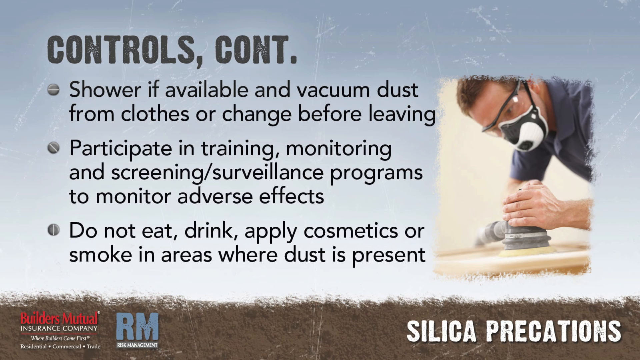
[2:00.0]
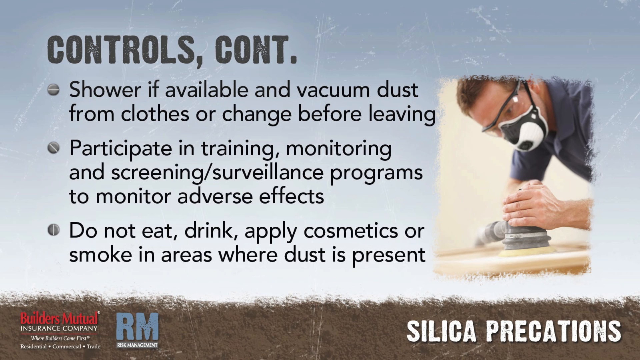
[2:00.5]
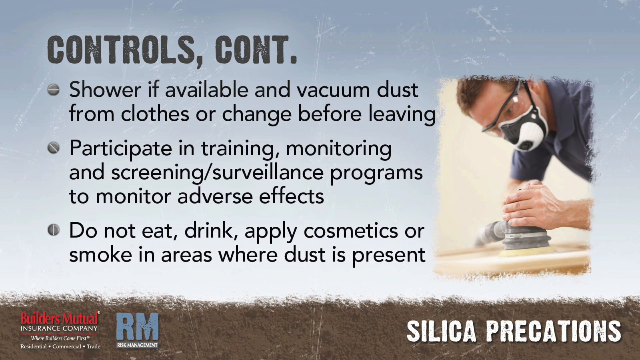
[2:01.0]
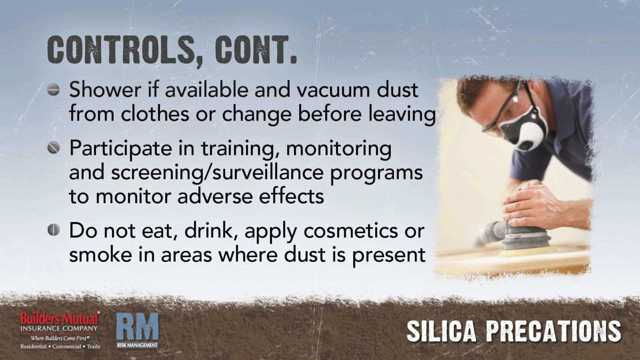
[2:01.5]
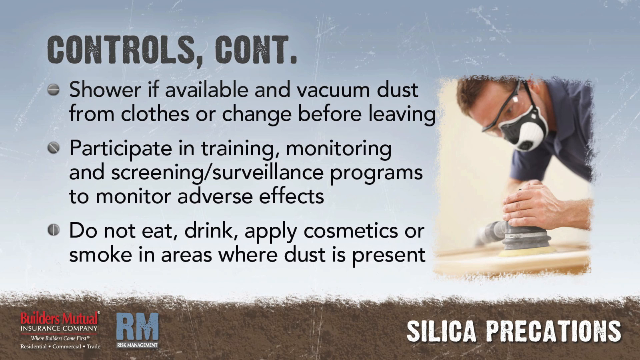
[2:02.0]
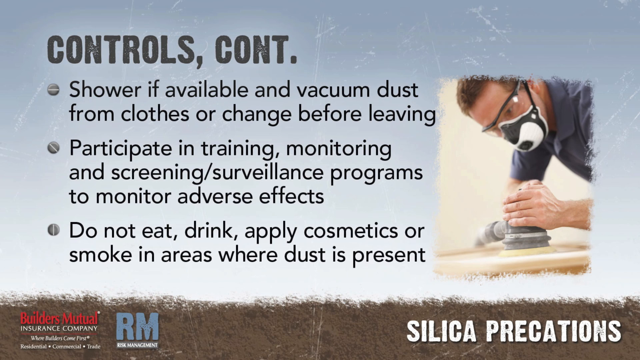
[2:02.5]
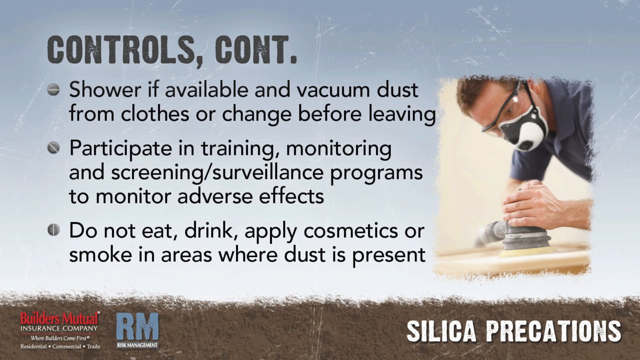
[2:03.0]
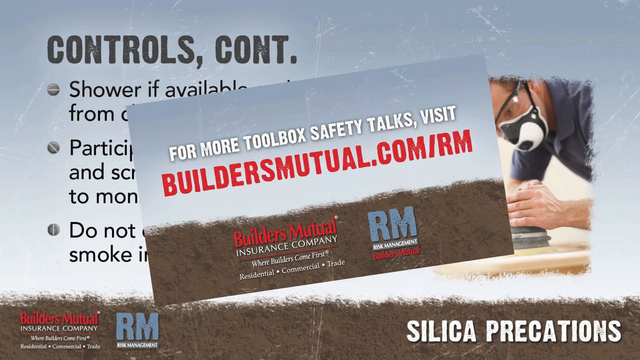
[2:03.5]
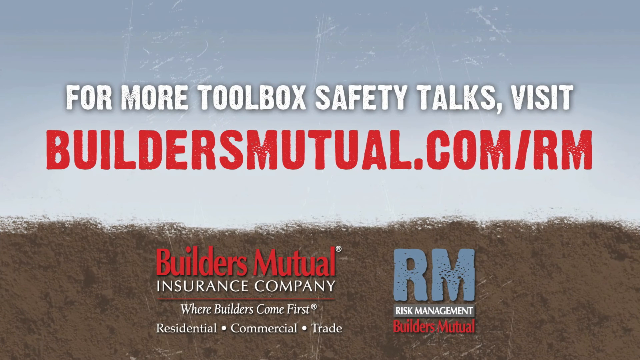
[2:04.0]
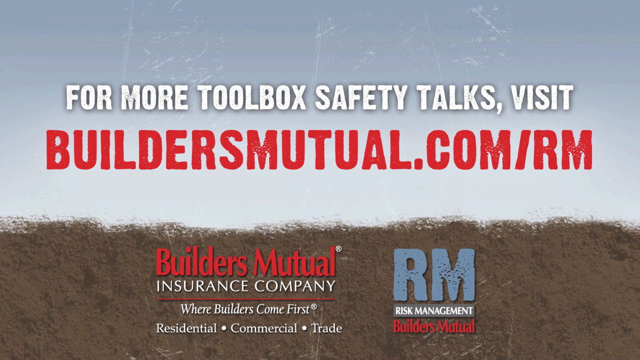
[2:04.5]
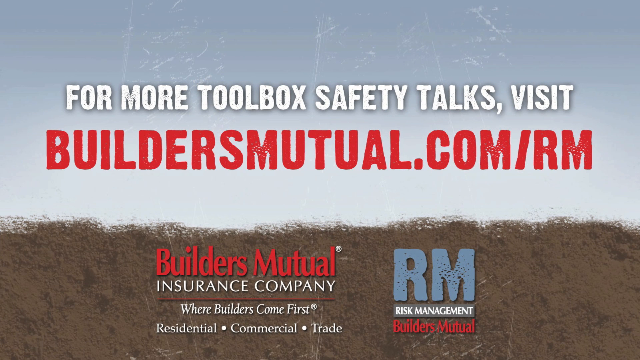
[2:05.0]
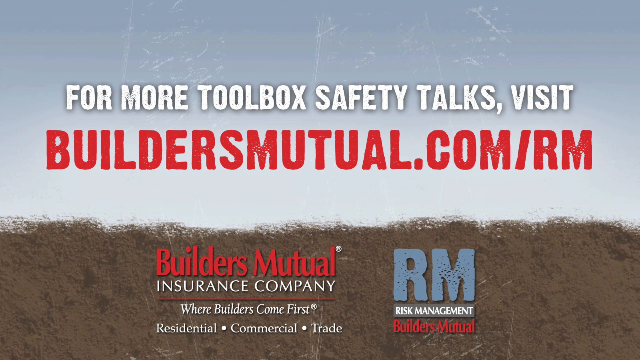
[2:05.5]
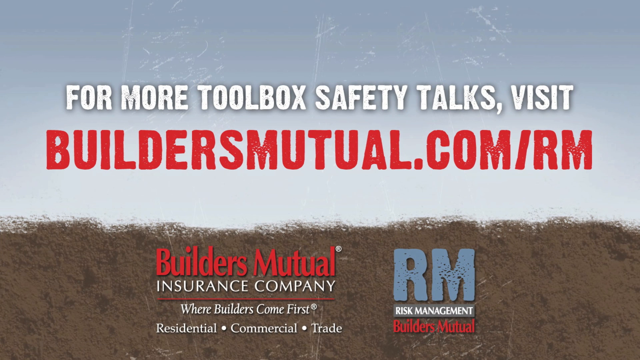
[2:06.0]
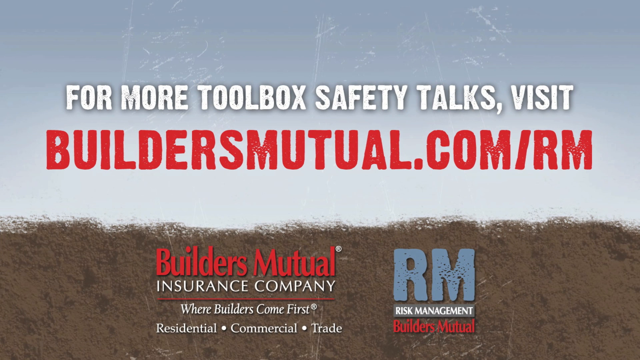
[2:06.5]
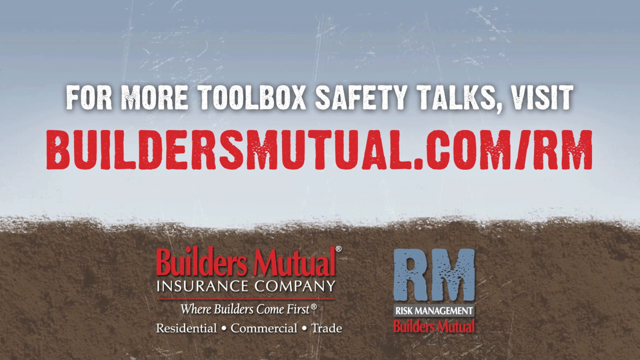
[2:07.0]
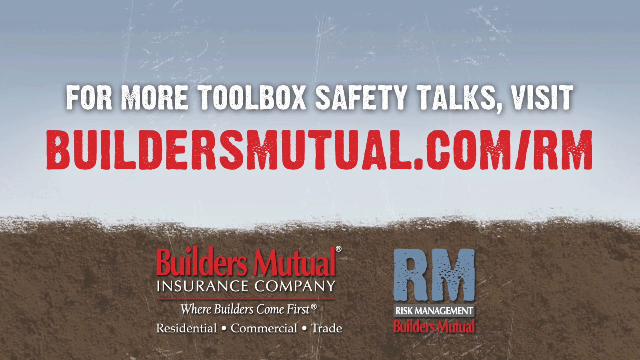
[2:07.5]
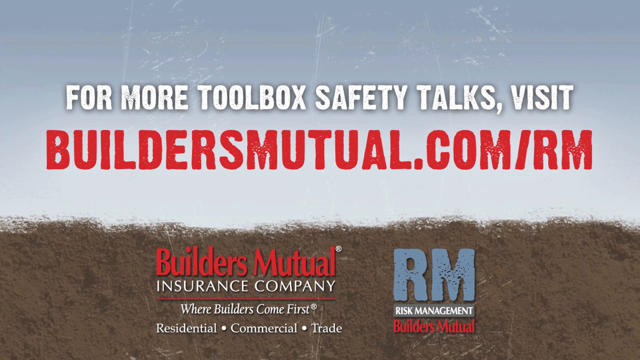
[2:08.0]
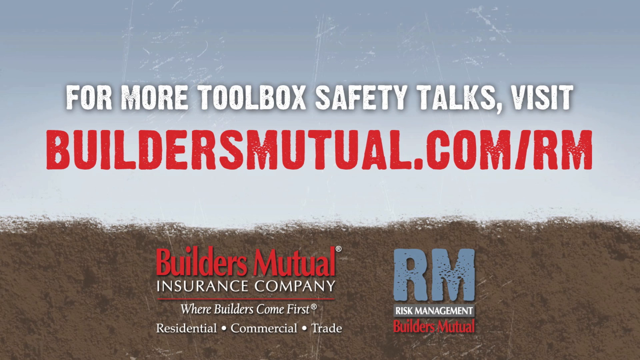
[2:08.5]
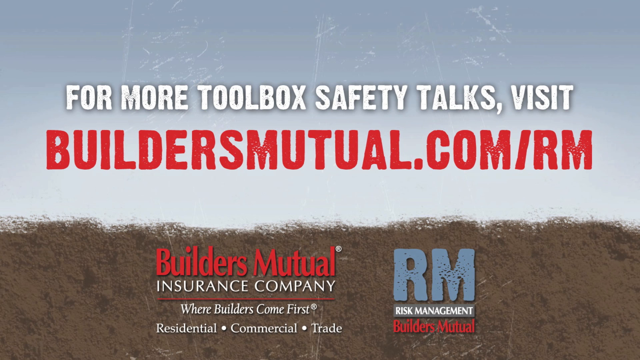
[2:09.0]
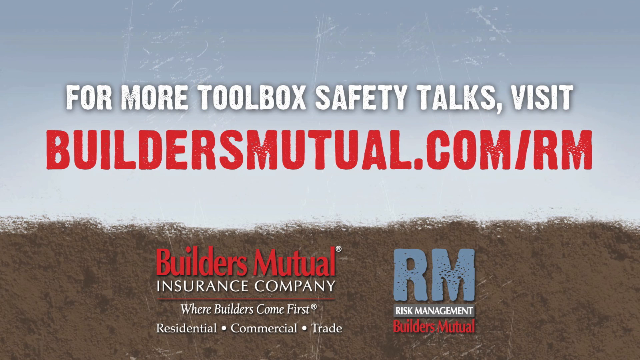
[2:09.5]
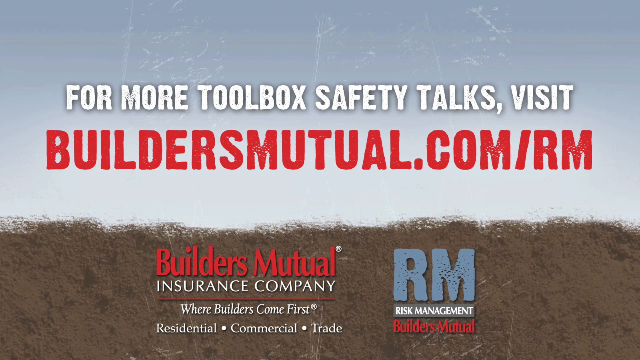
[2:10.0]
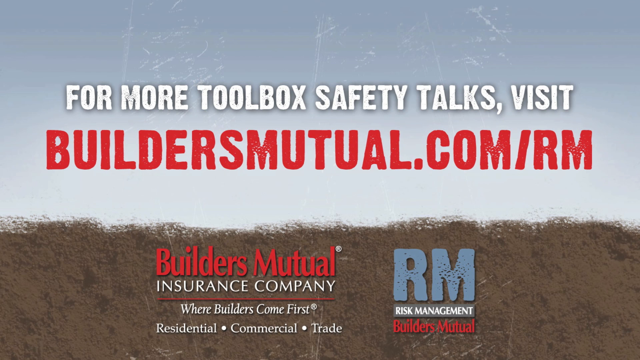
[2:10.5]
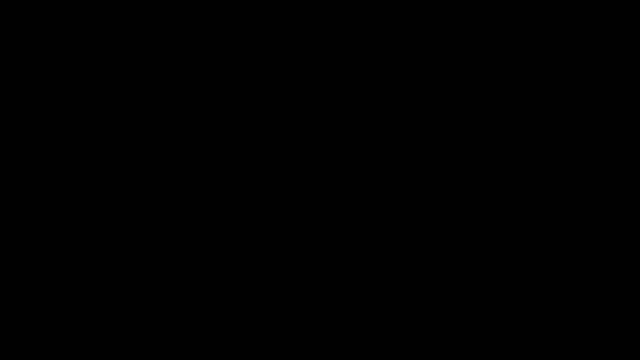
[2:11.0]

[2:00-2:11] The scene changes to white text in the upper area reading "for more toolbox safety talks, visit", with the website in large red text in the middle: "buildersmutual.com/rm". On the bottom left is the logo for Builders Mutual Insurance Company, with text below it reading "where builders come first, residential, commercial and trade". To the right is another logo, an R and an M side by side, with "Risk Management, Builders Mutual" underneath.